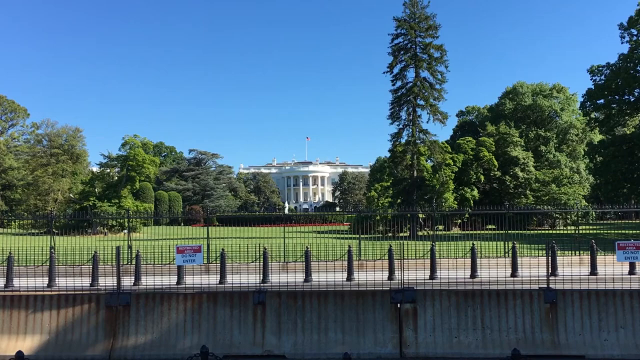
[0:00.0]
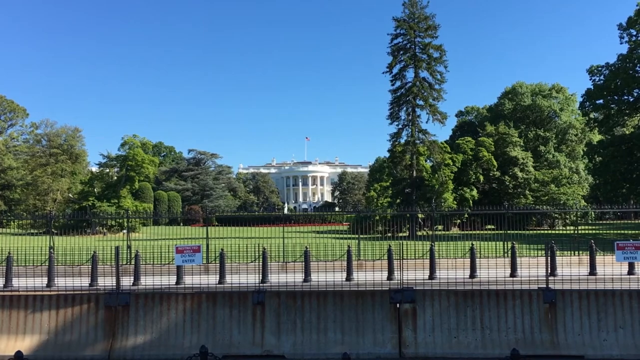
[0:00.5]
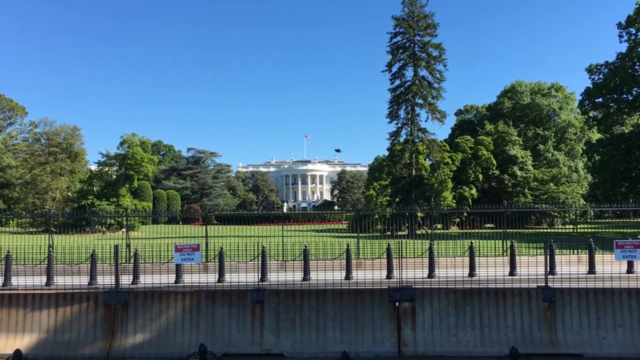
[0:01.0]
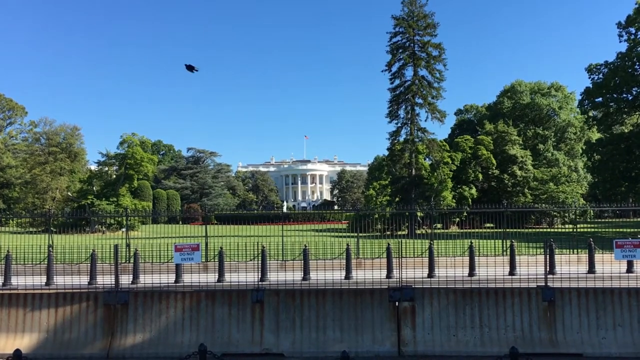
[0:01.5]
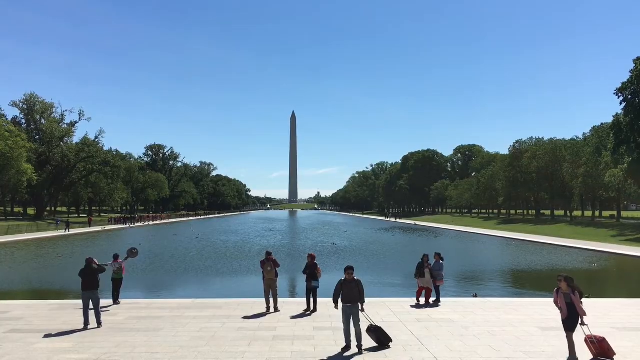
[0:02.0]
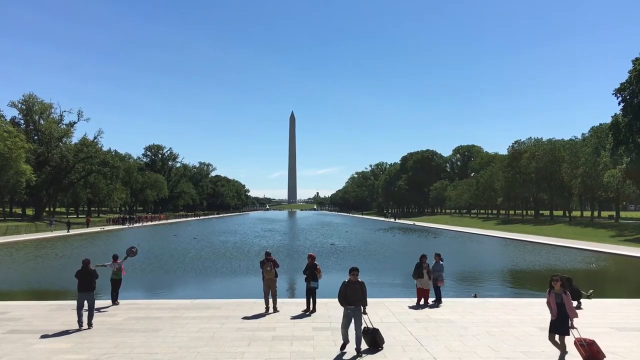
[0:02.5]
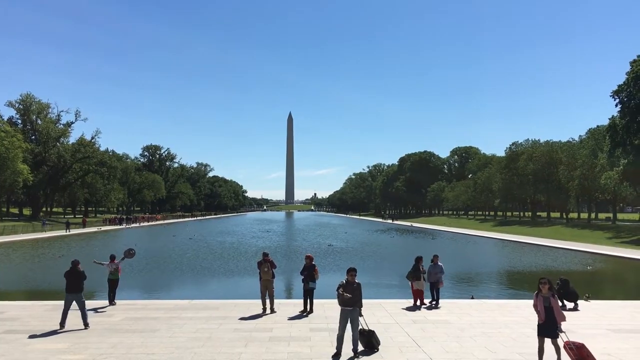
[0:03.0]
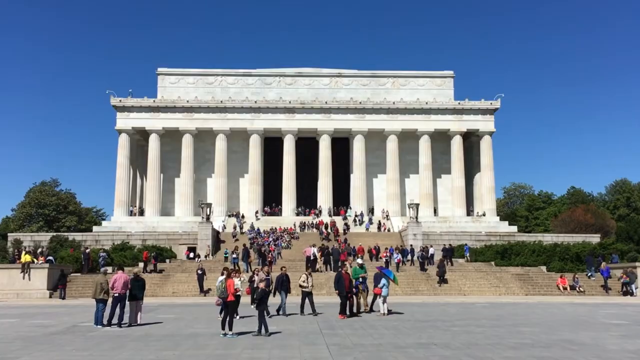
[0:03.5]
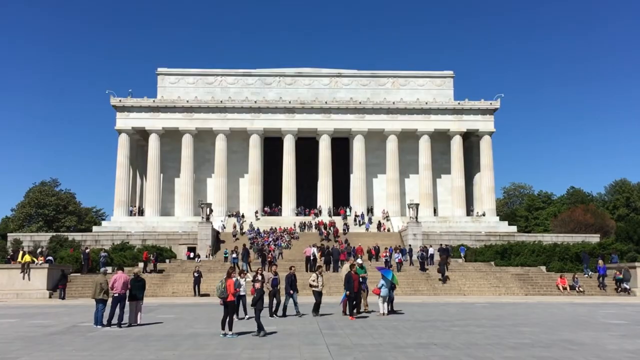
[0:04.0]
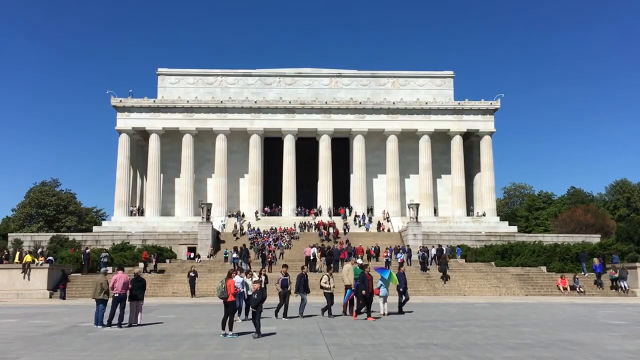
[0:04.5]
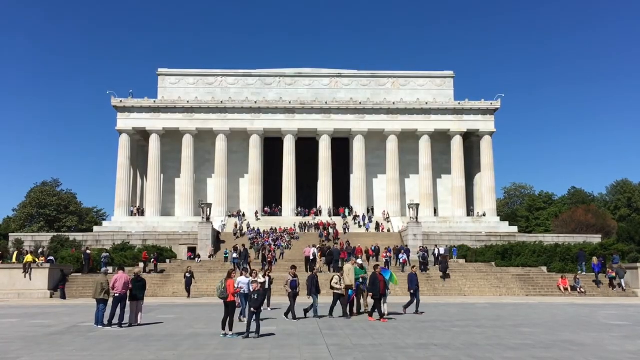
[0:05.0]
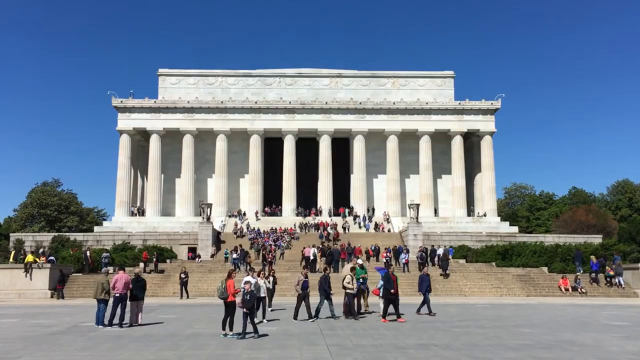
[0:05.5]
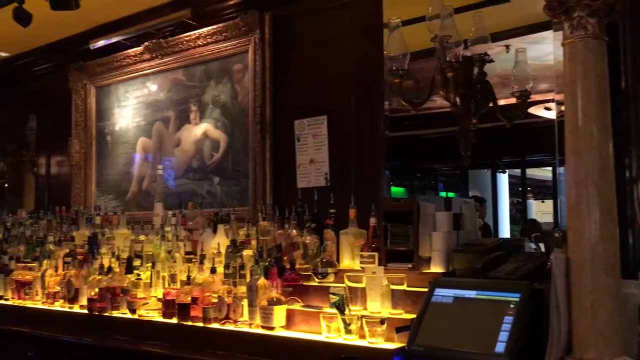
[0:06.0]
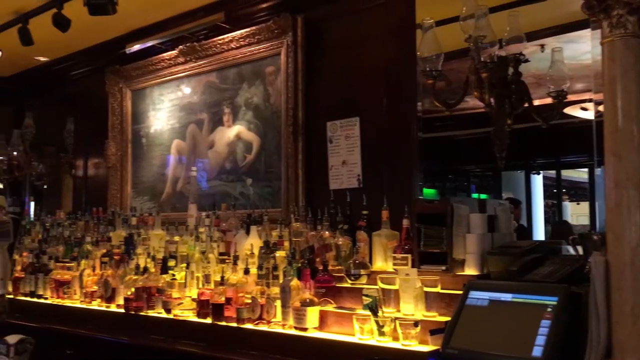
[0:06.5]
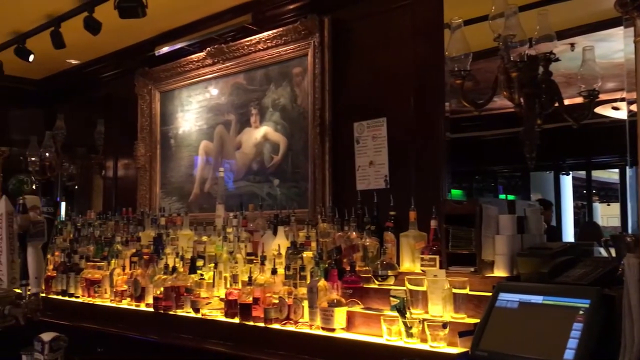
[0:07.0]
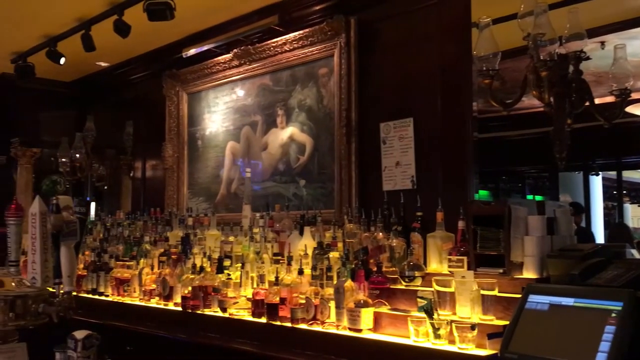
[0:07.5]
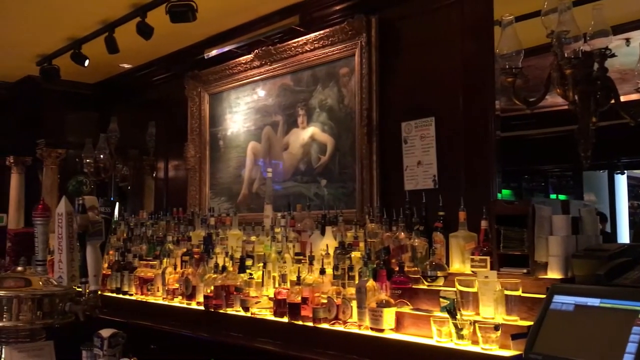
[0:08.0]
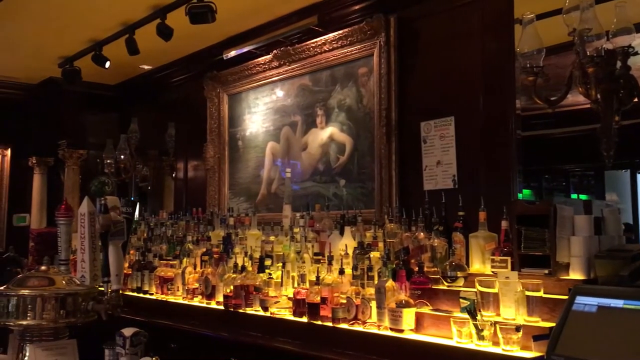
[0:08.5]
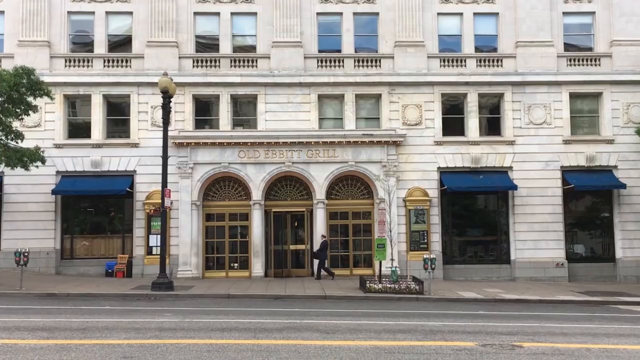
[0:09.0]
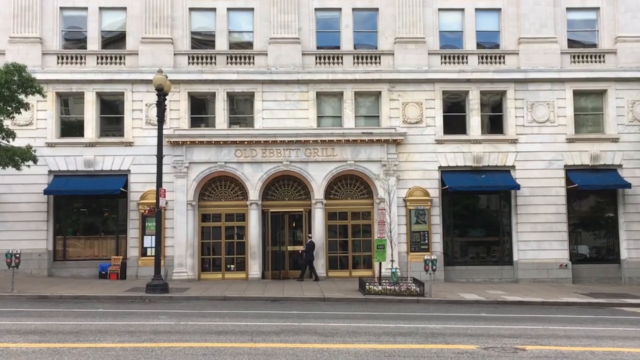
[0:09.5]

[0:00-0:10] The video shows Washington D.C. and its various monuments, with people visiting each one. Among the important areas are the White House, which is blocked off, and the National Washington Monument, with people standing next to the waterway. The people are taking photos of the standing tower or of themselves, and one individual slowly raises their hand up over their head to take photos. The scene moves to another monument, the one with Abraham Lincoln, where people walk up and down the steps and look around. Most of them walk at a leisurely pace next to other people. They are all in jeans, so the weather is probably cooler. Next comes what looks like possibly a restaurant or bar, where a painting of a woman lying down is the main focus, with liquor and alcohol bottles underneath it. Then the video shows what is apparently the outside of a bar called Old Ebbet Grill, a white building with a unique exterior.